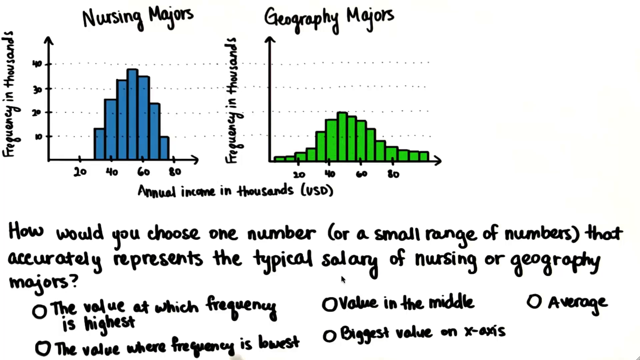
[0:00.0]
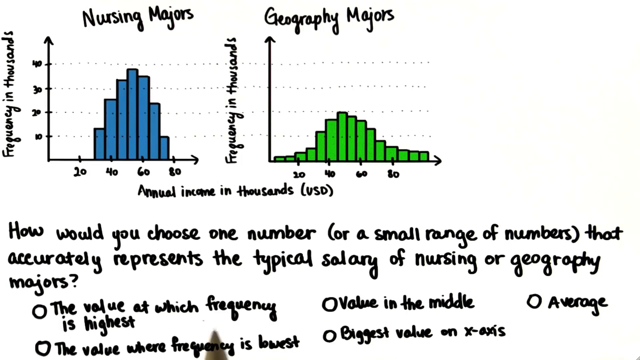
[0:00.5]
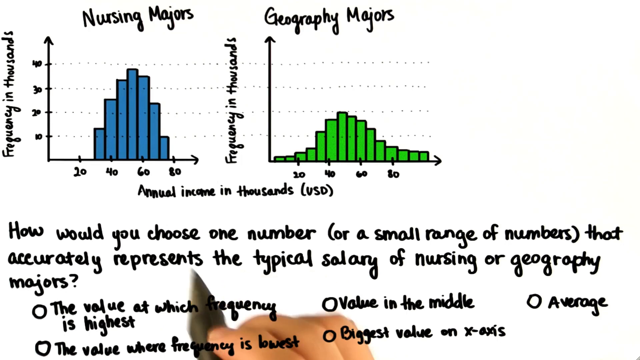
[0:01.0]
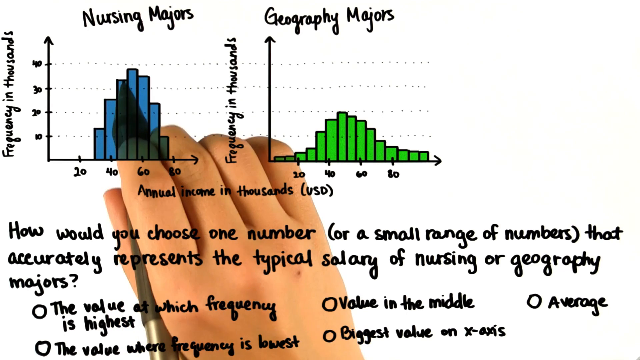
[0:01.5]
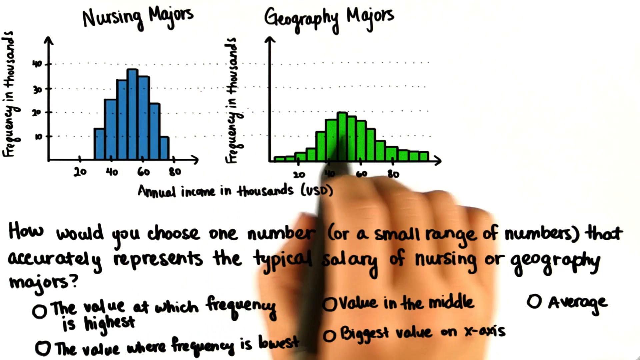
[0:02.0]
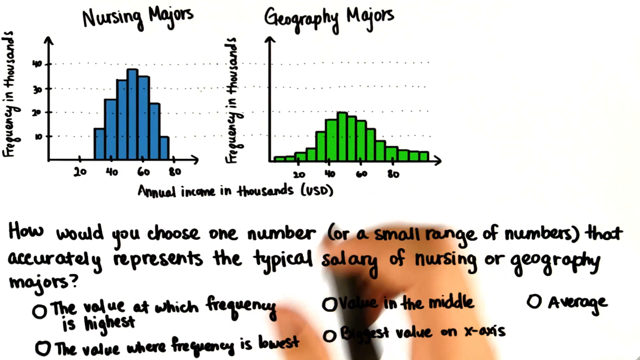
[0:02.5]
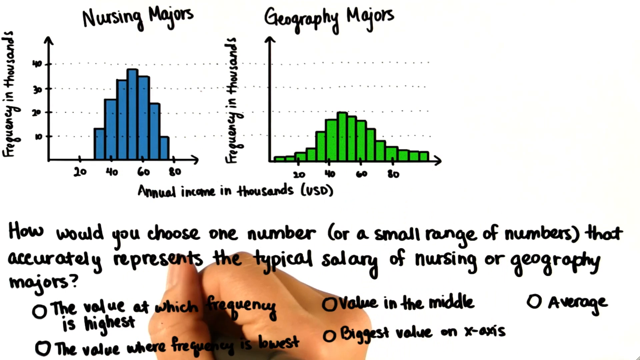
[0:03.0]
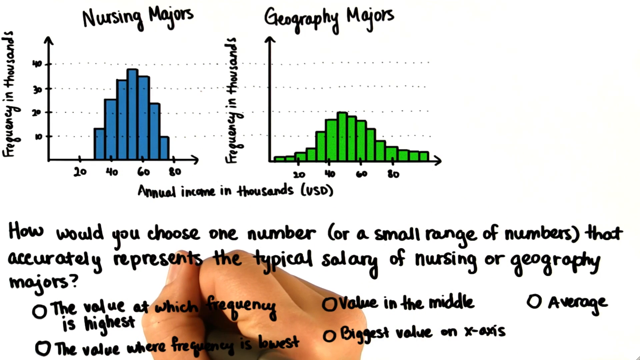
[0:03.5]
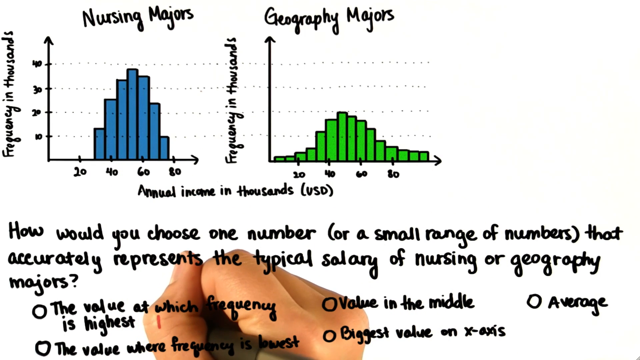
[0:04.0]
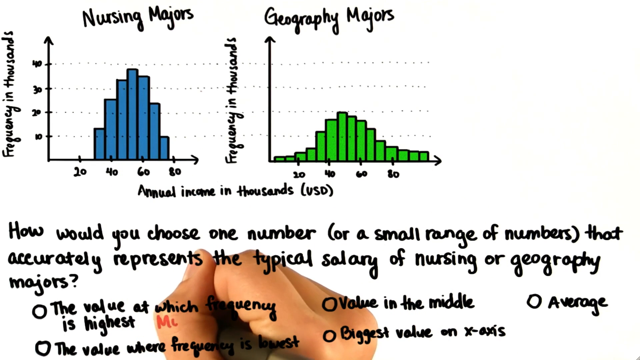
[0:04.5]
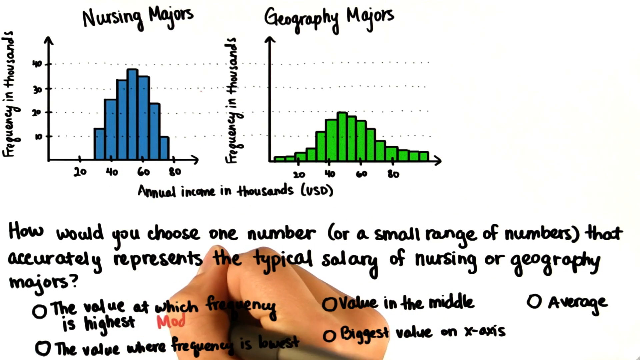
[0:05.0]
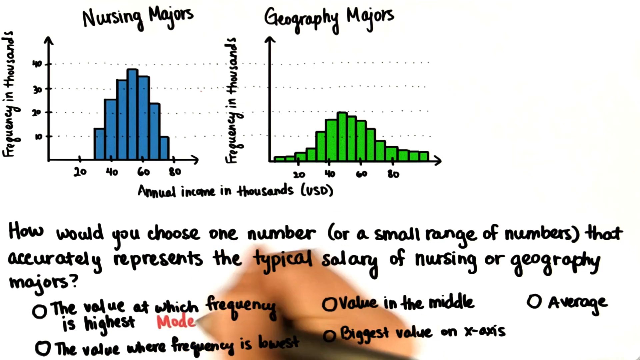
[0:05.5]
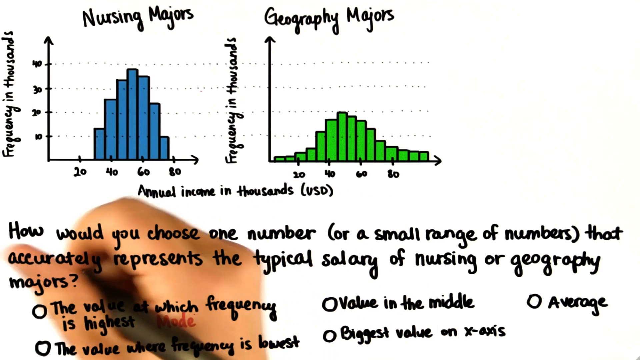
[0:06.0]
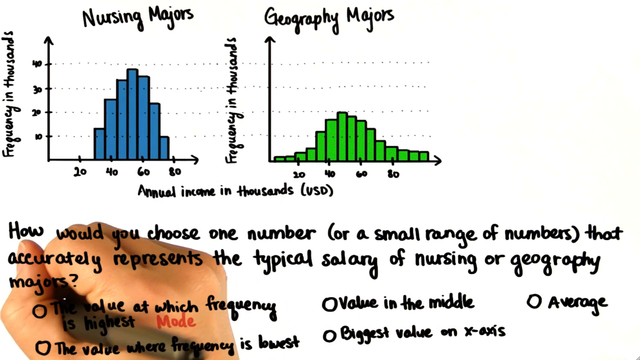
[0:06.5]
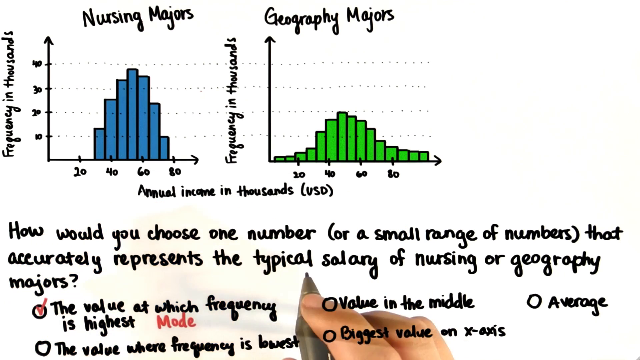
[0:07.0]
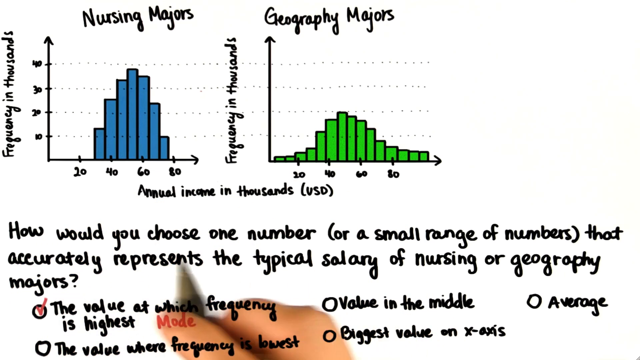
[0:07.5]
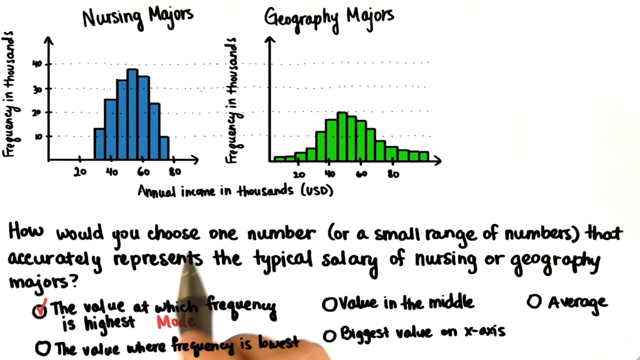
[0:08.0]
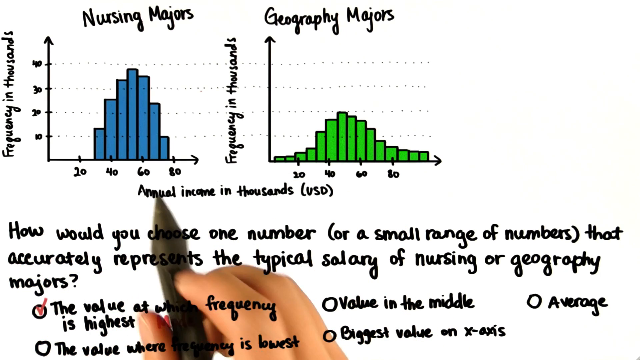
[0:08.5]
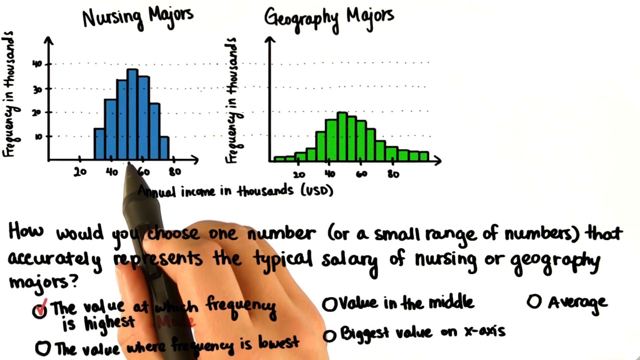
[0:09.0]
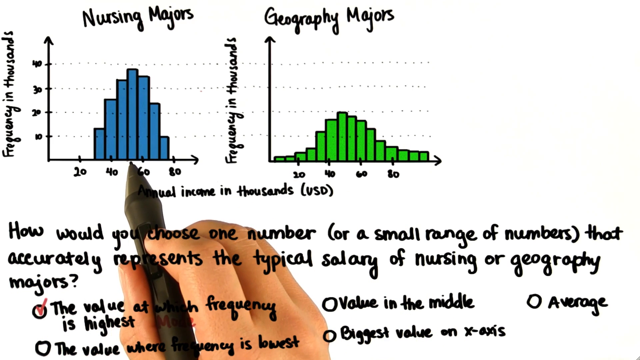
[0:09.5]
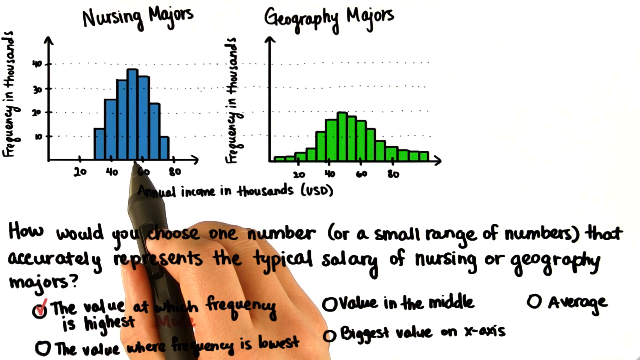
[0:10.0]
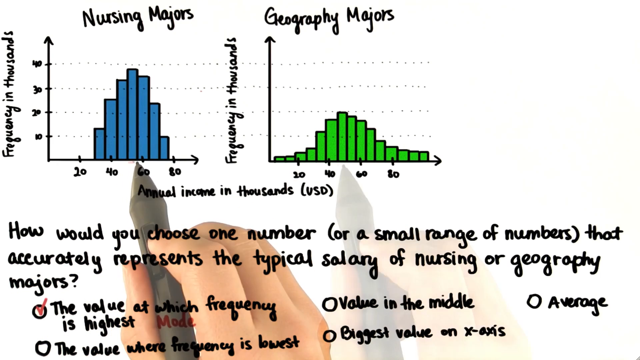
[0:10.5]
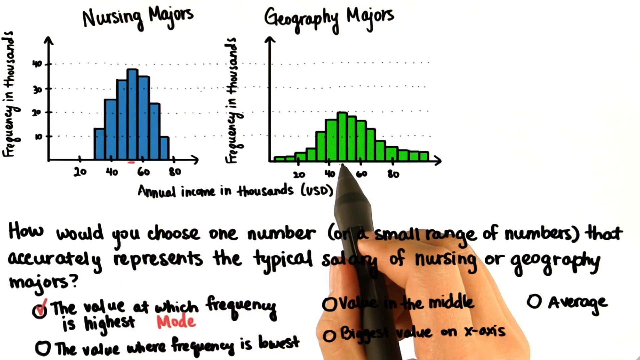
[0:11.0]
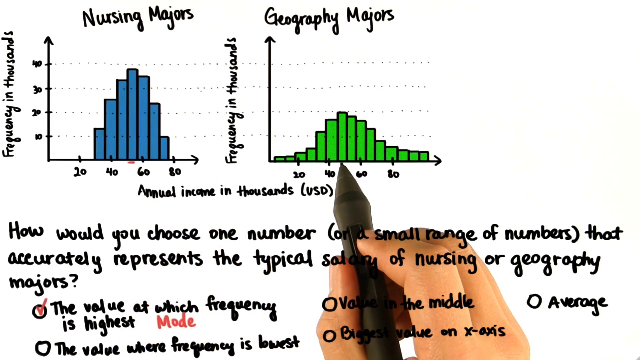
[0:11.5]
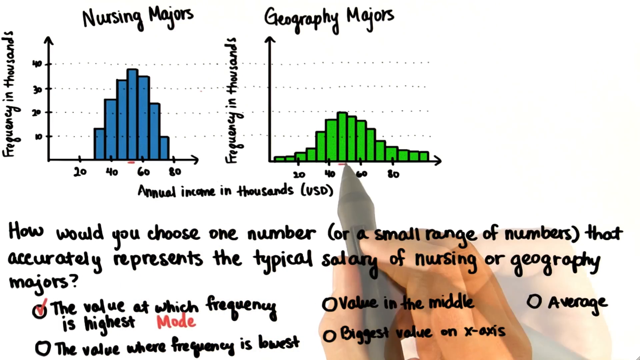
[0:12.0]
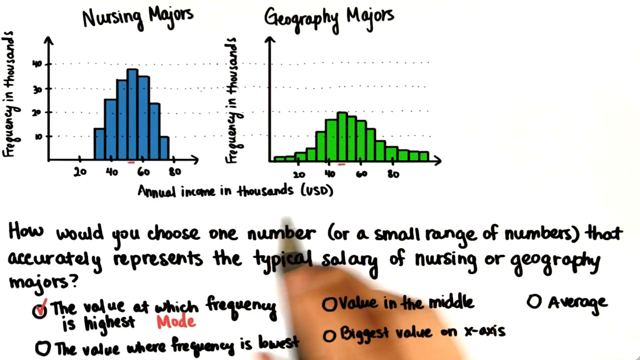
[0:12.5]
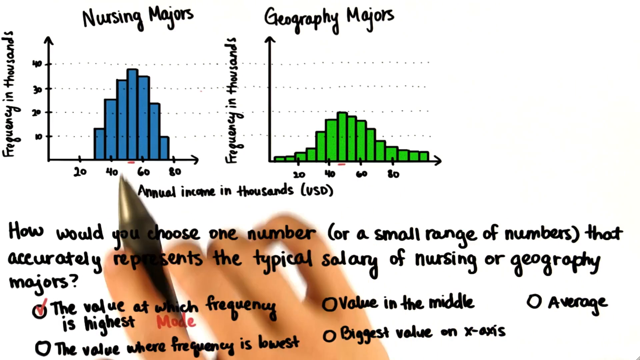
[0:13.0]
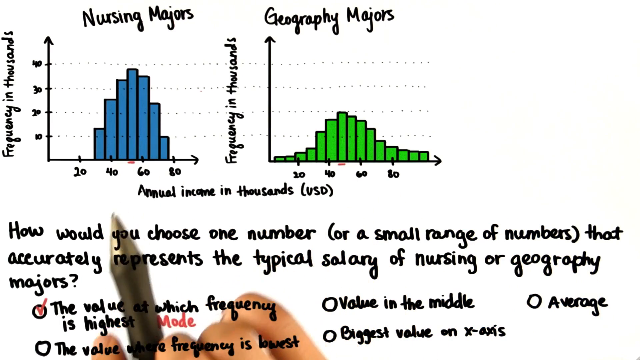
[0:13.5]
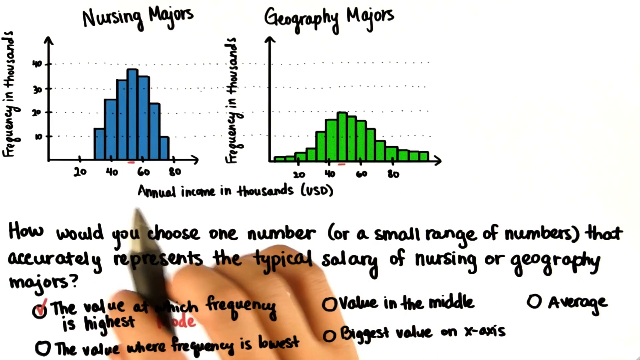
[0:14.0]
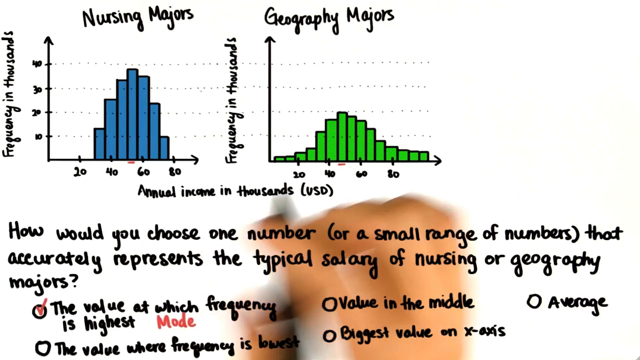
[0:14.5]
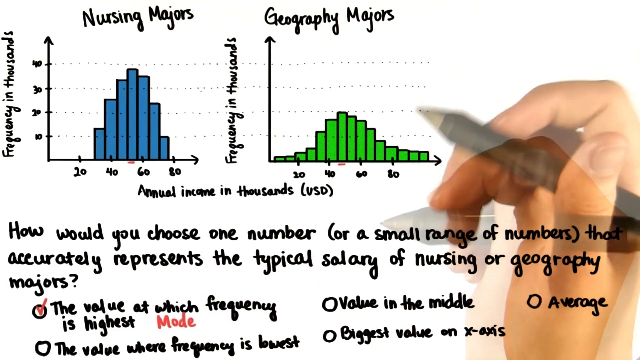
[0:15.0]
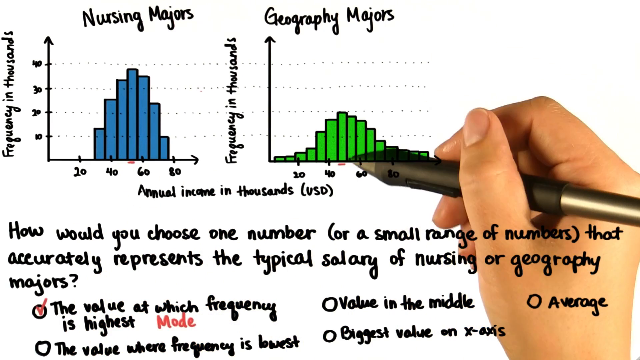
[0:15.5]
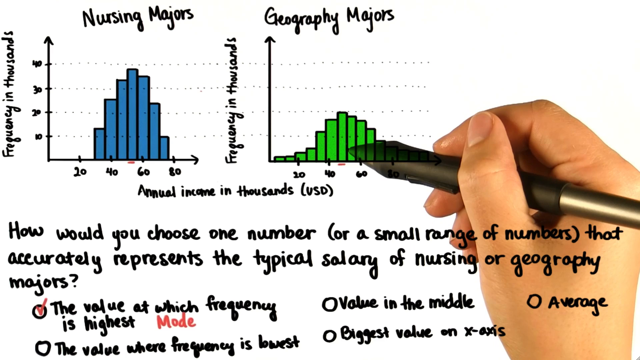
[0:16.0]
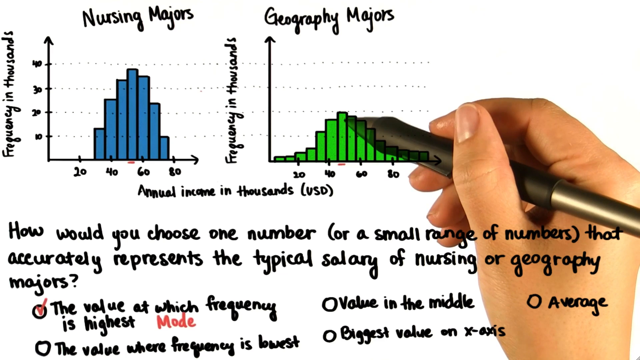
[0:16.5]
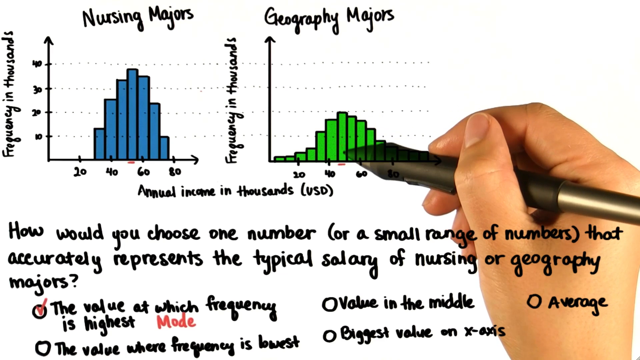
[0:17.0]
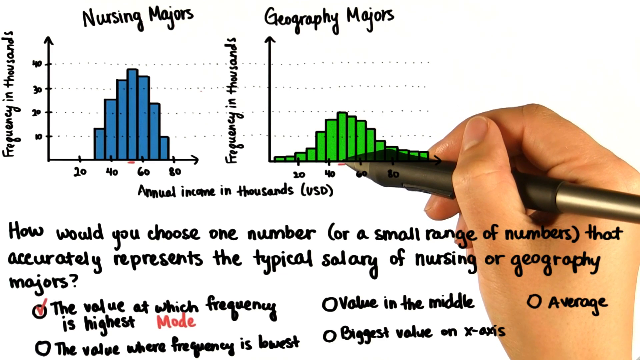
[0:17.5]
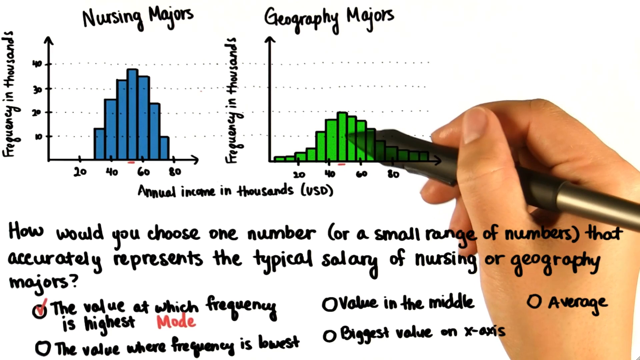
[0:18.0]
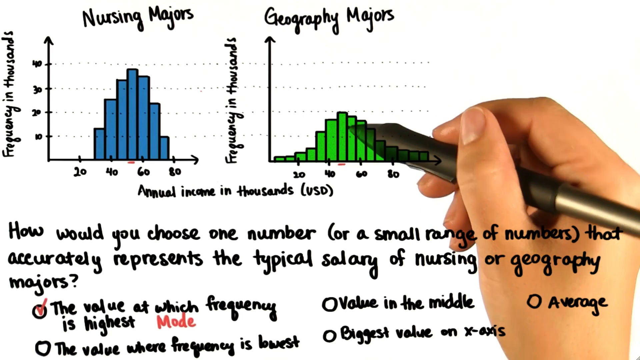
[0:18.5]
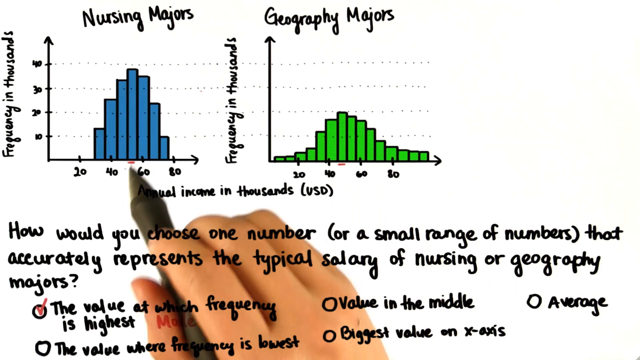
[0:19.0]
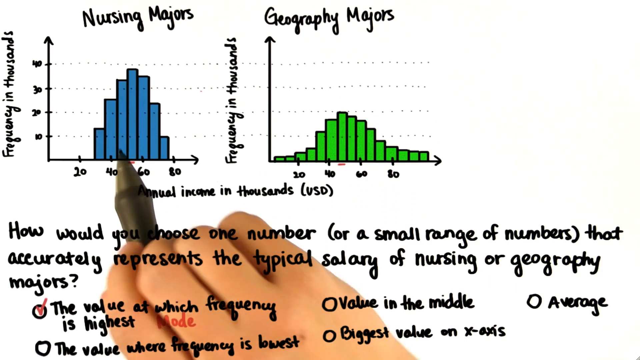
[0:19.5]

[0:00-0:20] The first diagram is about nursing majors; its text is written in black and its bars are blue. Next to it is a diagram for geography majors, with green bars. Along the bottom a question reads "how would we choose one number or a small range of number that actually represents the typical salary of a nursing or geography majors", and below it are answers to pick from. A hand holding a big marker points at the diagrams and writes on the bottom part where the answers are. At the end, the person explaining the graph is seen. The side of each graph reads "frequency in thousands", and the bottom of the graph reads "annual increase in thousand US dollars".